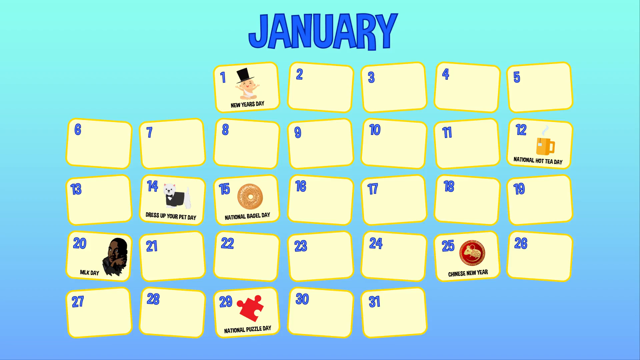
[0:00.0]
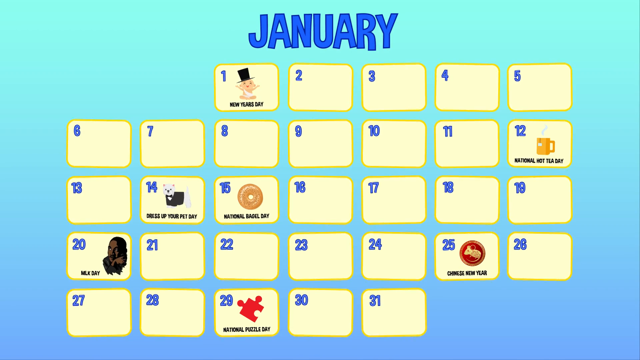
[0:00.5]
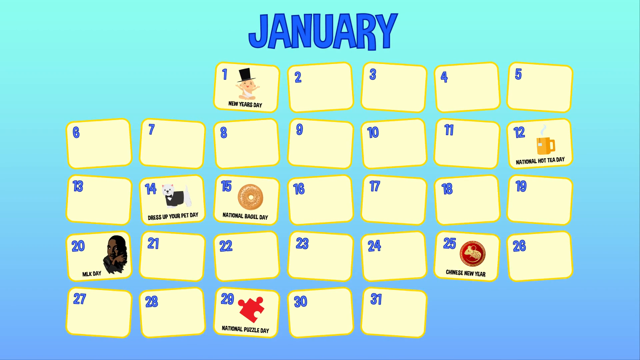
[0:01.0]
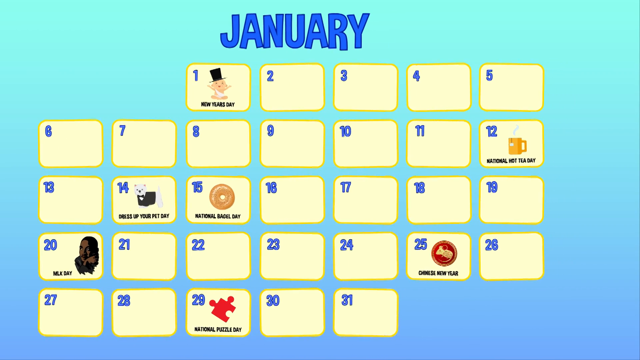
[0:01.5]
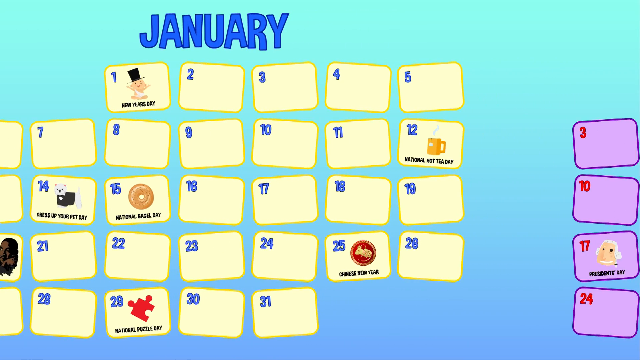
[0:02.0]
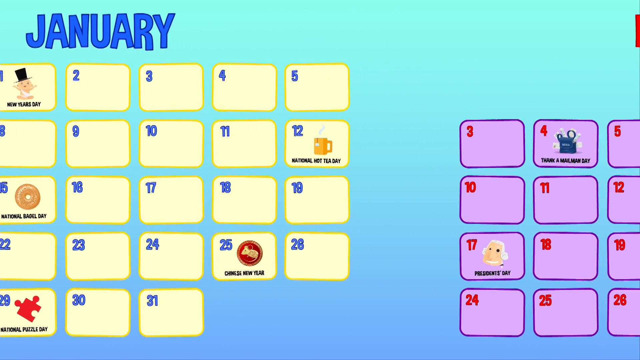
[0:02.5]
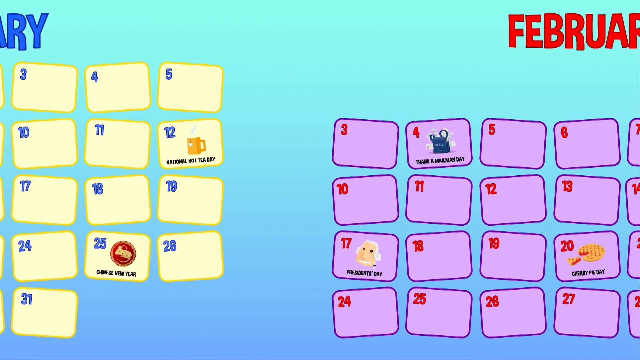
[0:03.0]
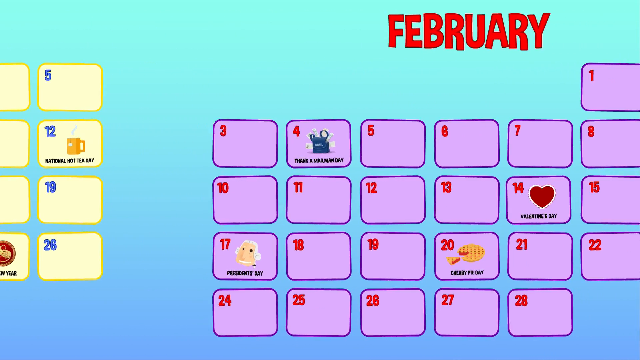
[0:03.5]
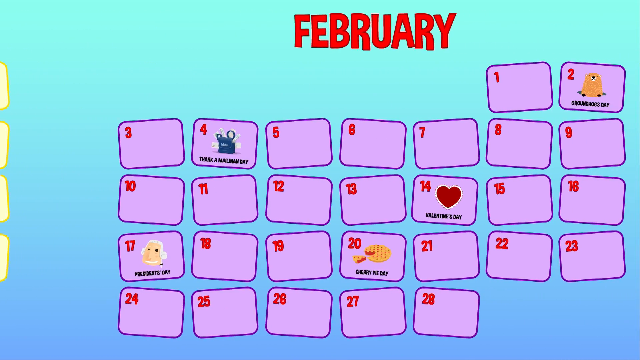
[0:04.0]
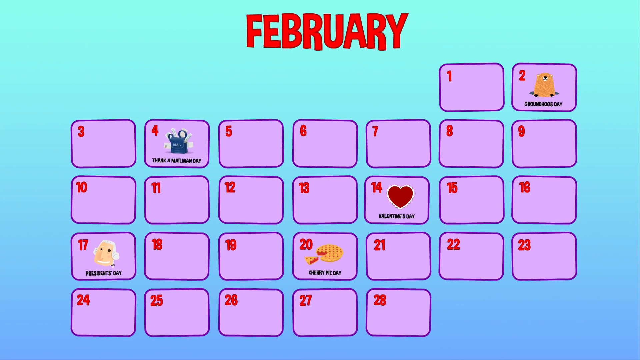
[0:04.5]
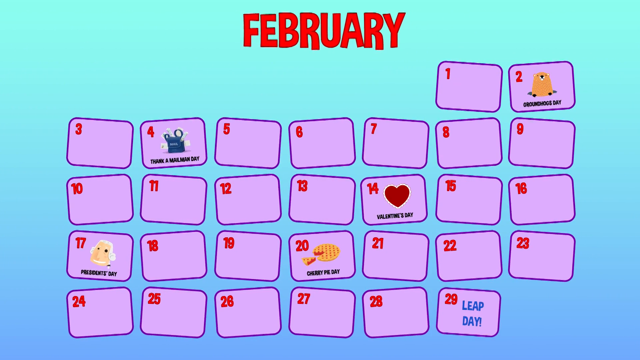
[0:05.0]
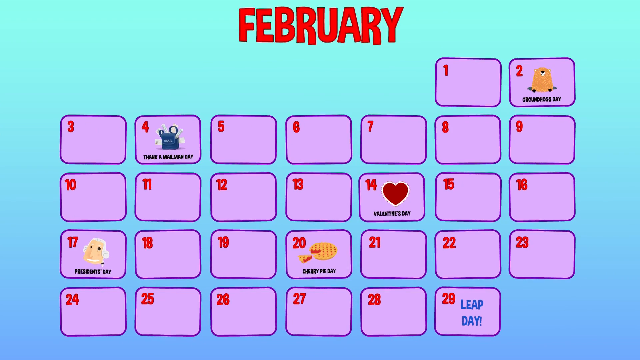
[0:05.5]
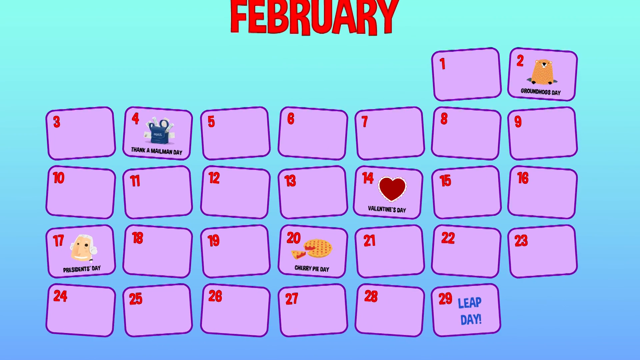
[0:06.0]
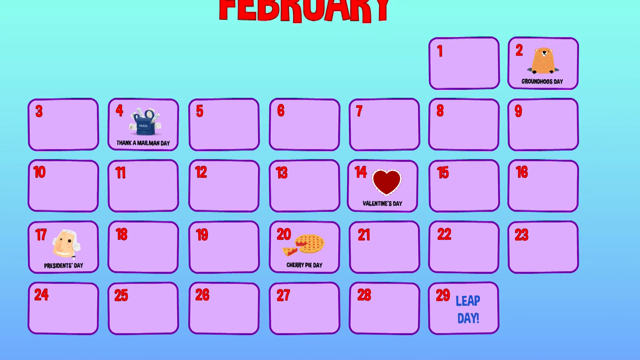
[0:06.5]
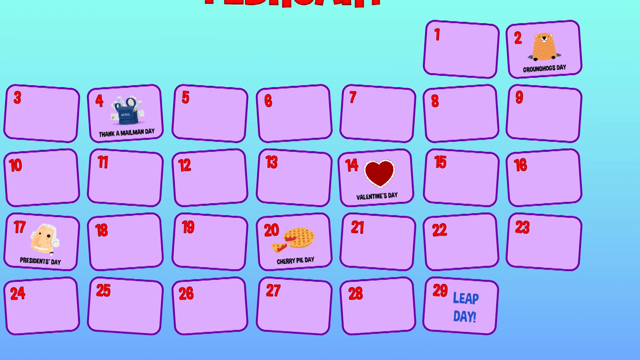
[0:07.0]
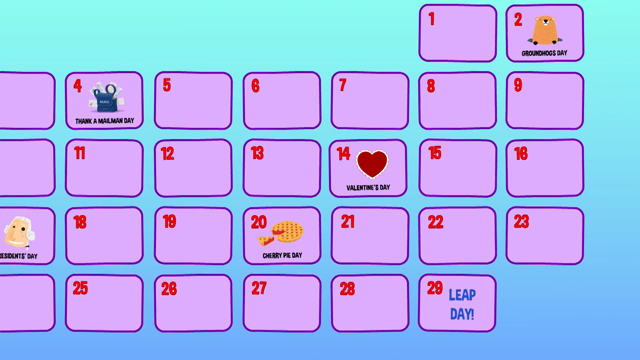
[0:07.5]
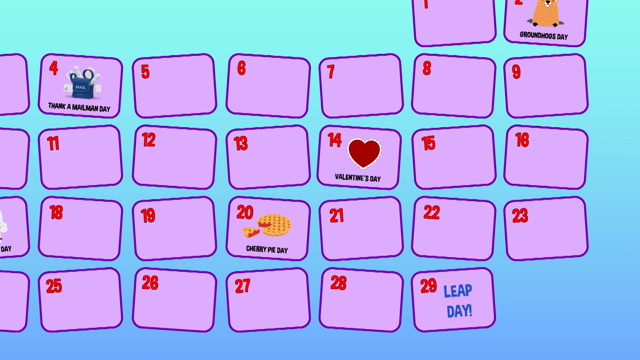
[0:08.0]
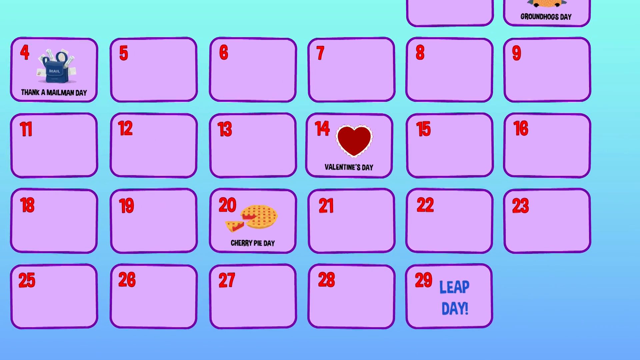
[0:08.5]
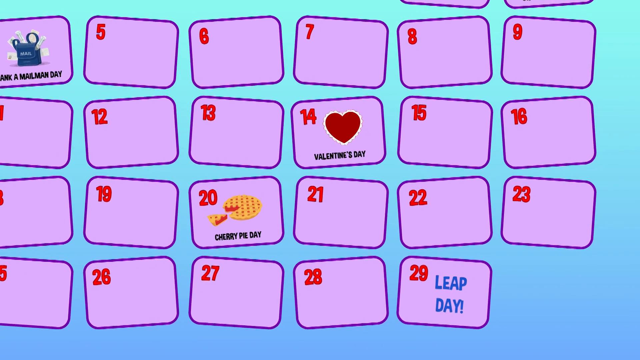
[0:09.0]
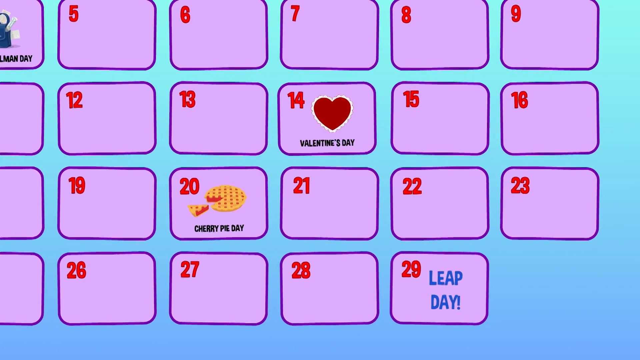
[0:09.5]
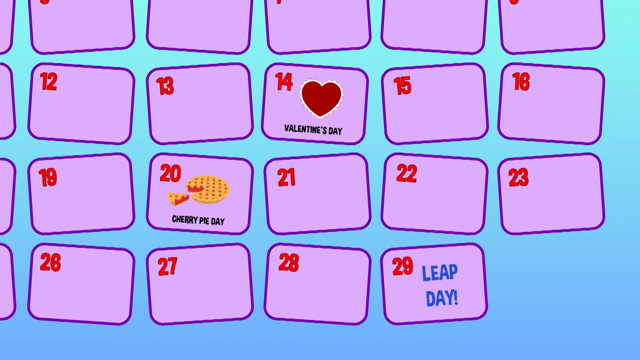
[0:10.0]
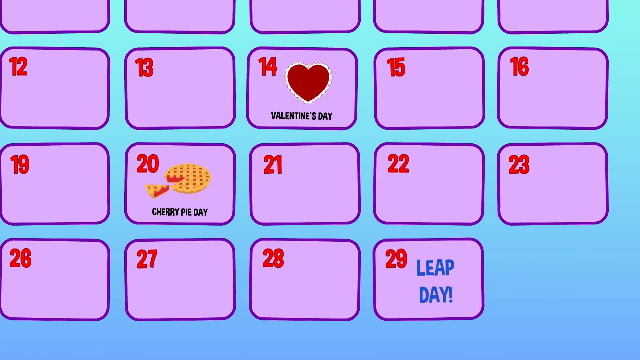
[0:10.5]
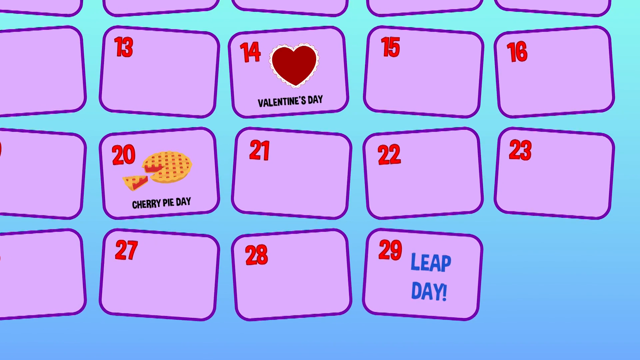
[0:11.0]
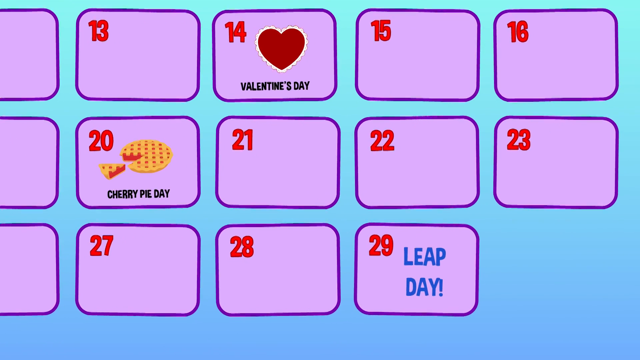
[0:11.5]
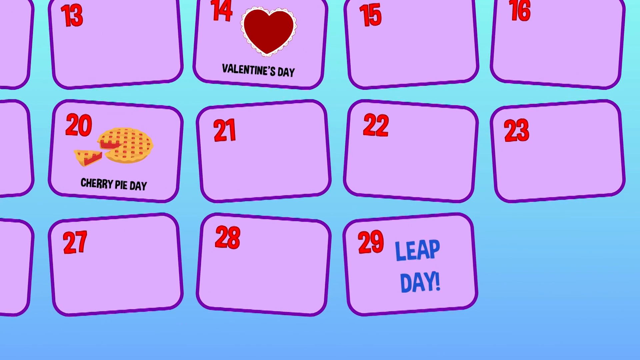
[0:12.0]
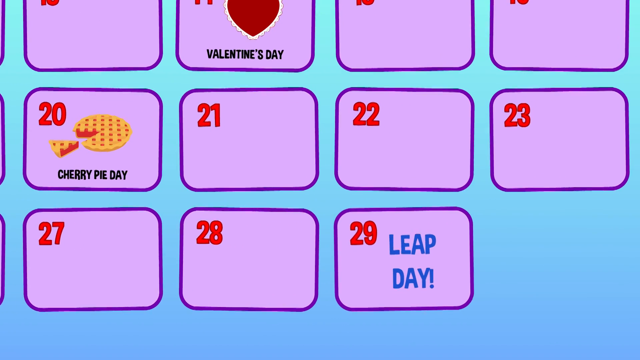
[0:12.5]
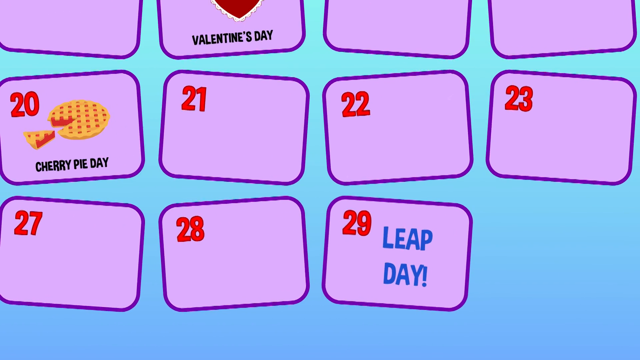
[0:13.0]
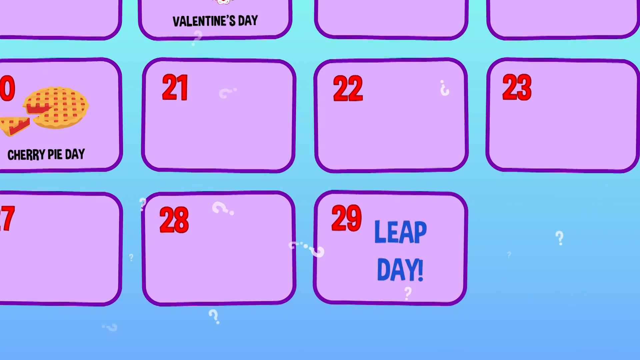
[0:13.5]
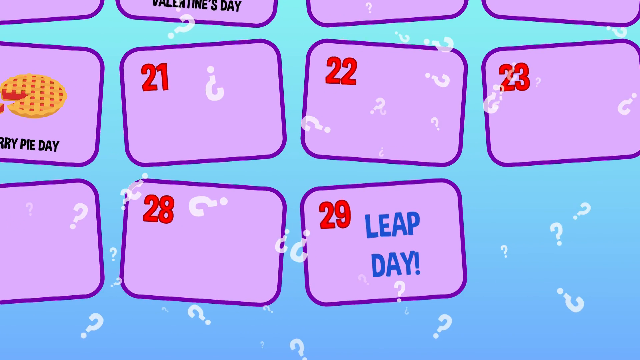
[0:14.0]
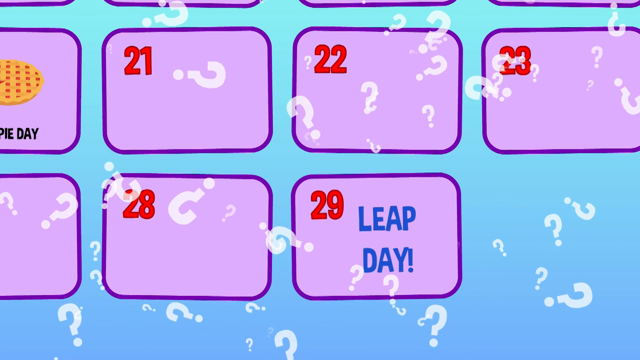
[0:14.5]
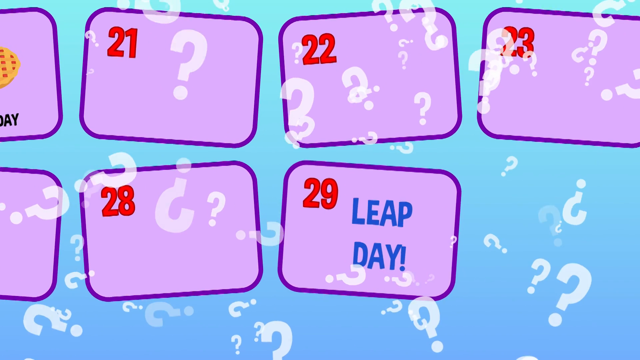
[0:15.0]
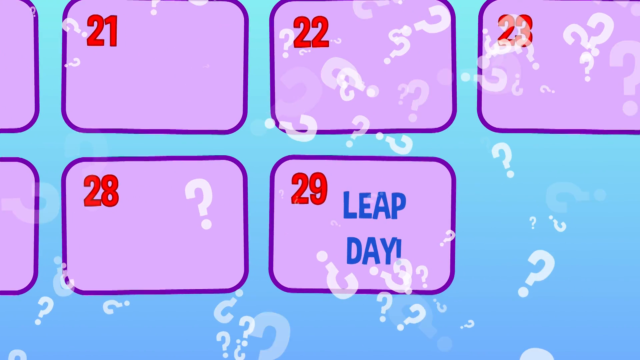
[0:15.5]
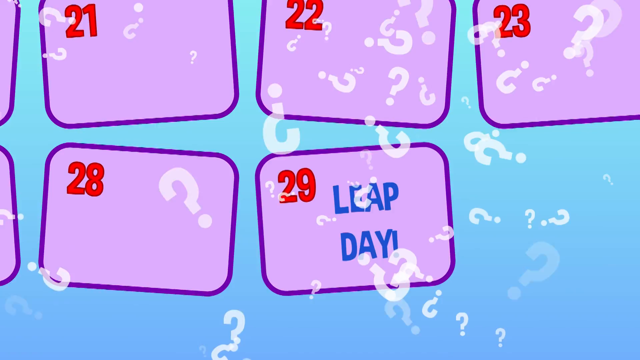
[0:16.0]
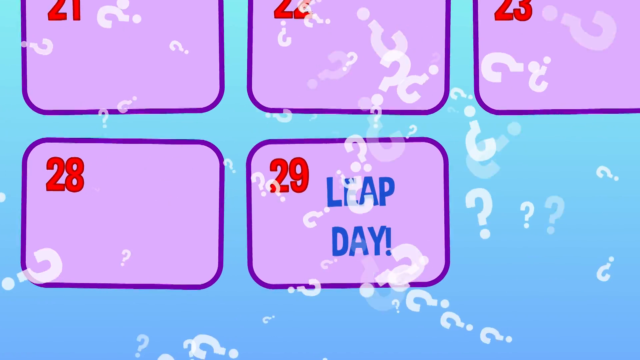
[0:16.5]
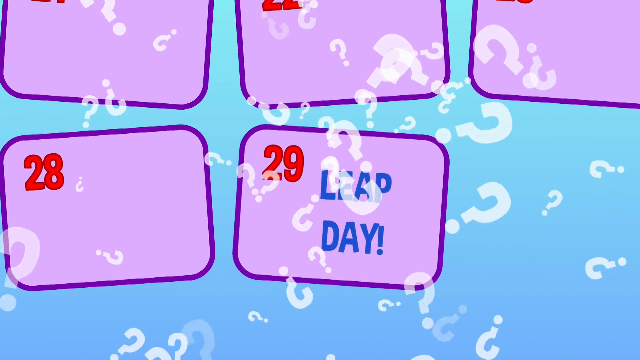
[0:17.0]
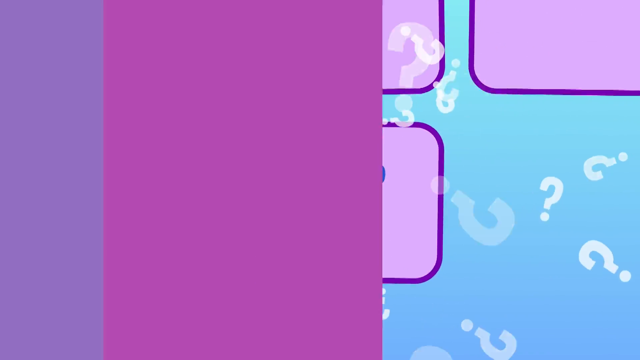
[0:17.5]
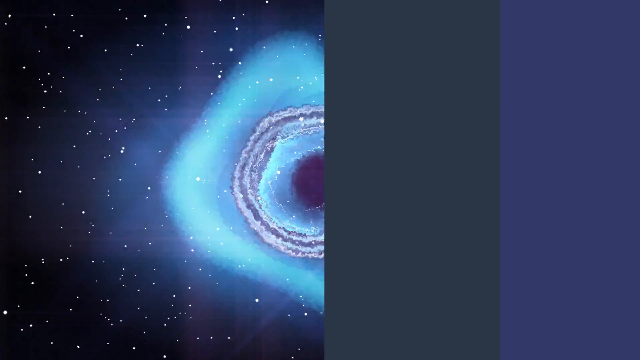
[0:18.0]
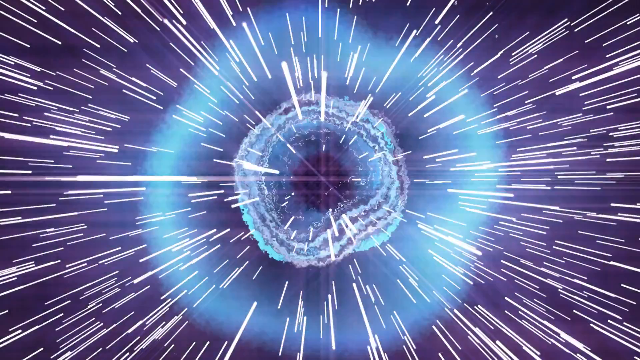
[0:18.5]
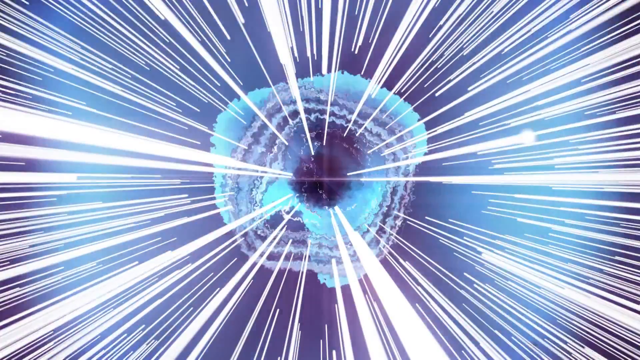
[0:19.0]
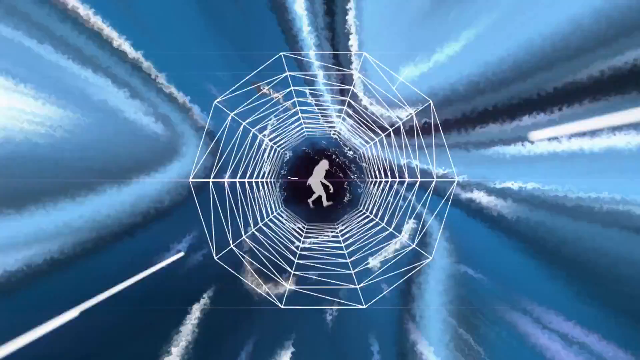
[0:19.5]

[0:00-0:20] An animated, cartoon-style calendar shows the month of January, with days running from 1 to 31 and icons on some of them. On the 1st there is an icon of a baby in a white robe and a black hat, with text below marking the day of the new year. On the 12th a cup of coffee or tea appears, labeled as the national day of tea. On the 14th a dog dressed in a smock marks the day to dress your dog. The 15th has a bagel icon and is labeled the national day of the bagel. On the 20th there is an image of Martin Luther King, marking Martin Luther King day. The 25th is labeled Chinese New Year, and the 29th the national day of the puzzles. The calendar then moves on to February, which runs from 1 to 28, again with several icons: the 2nd is Groundhog day, the 4th is the day to thank a postman, the people who deliver the mail, the 14th is Valentine's Day, the 17th is the day of the President, and the 20th is the day of the cherry pie. The camera begins to approach the 29th, which is labeled leap day, and dozens of question marks begin to appear as the intro starts.